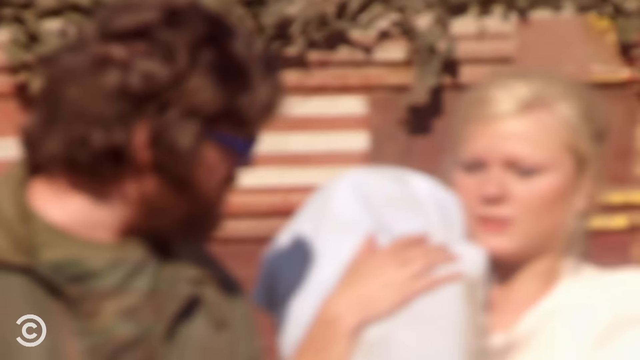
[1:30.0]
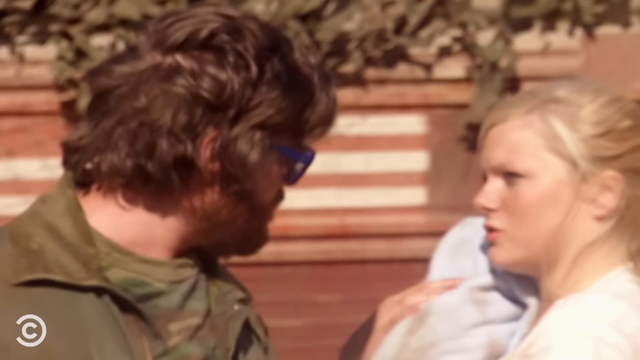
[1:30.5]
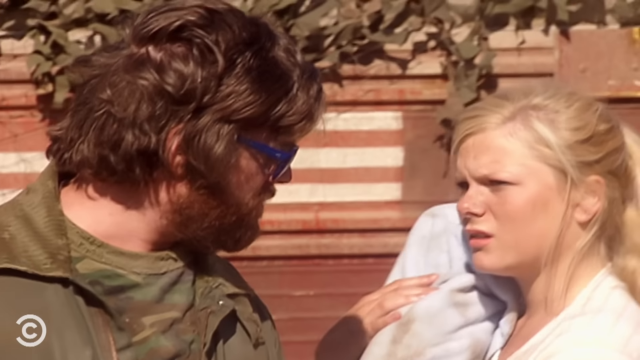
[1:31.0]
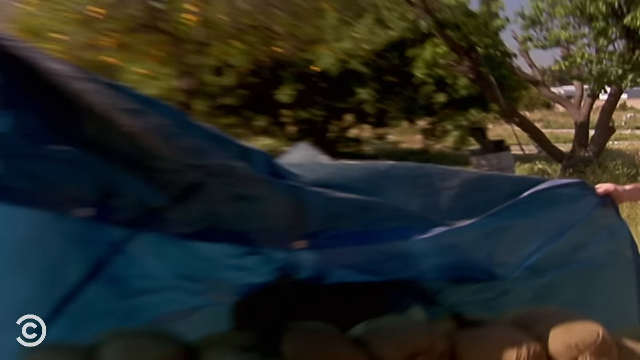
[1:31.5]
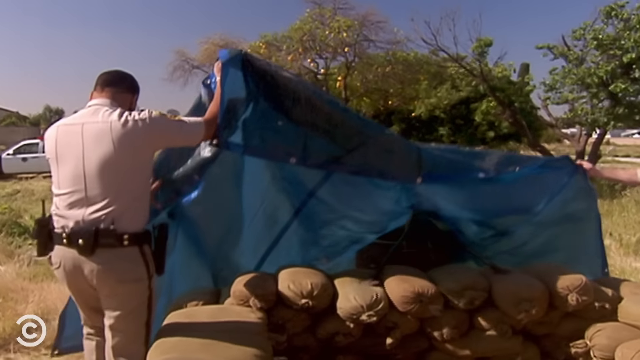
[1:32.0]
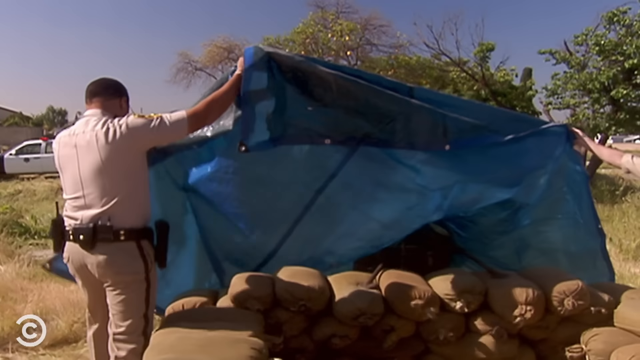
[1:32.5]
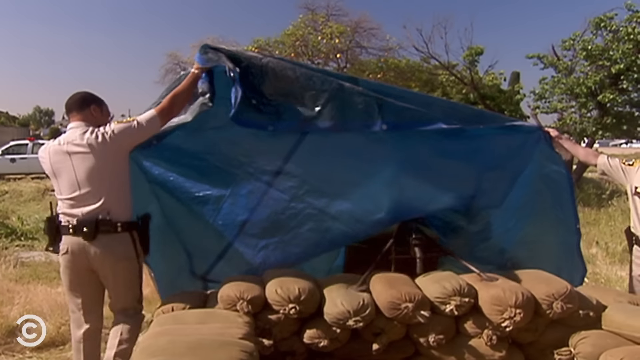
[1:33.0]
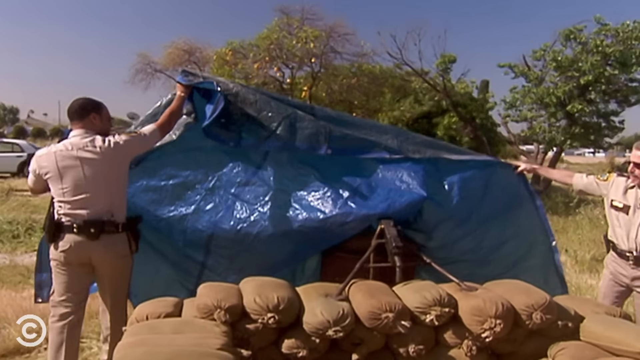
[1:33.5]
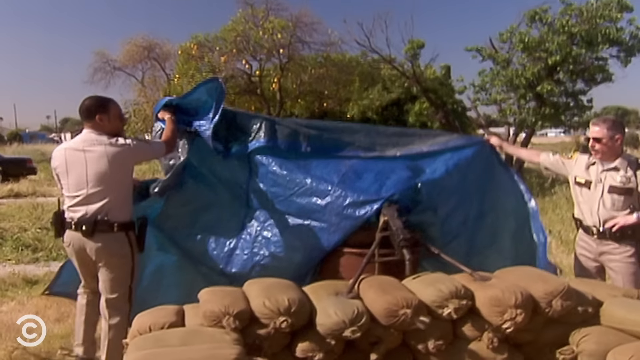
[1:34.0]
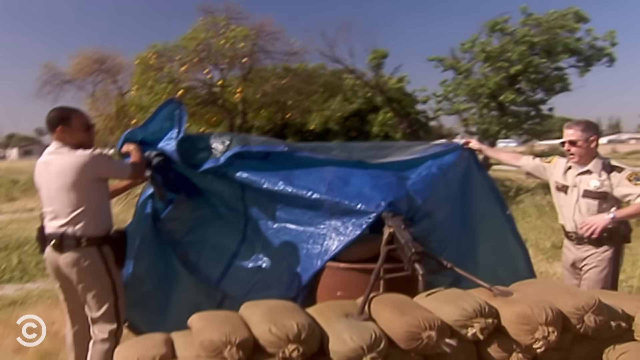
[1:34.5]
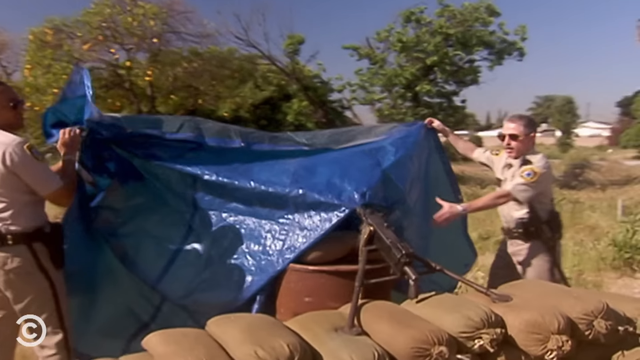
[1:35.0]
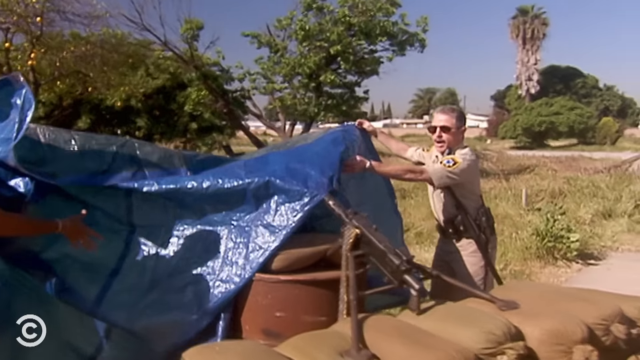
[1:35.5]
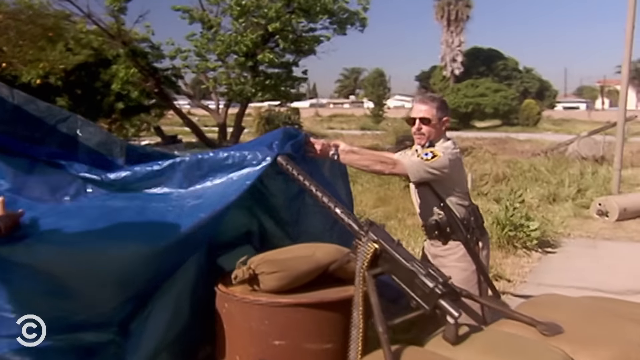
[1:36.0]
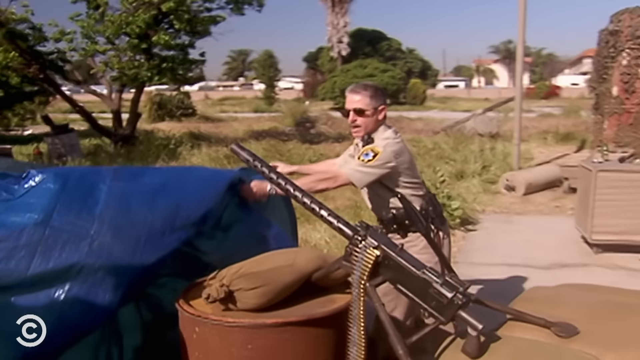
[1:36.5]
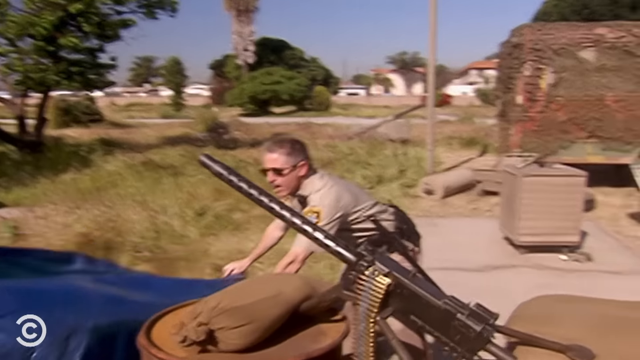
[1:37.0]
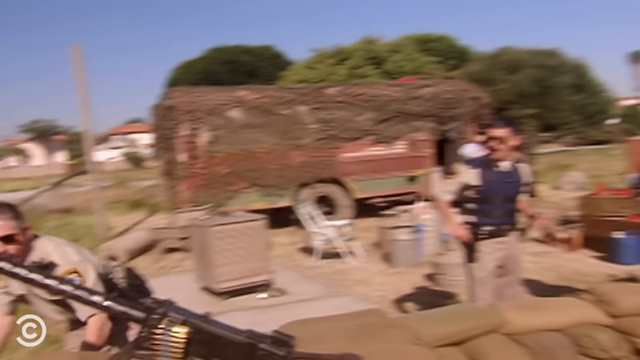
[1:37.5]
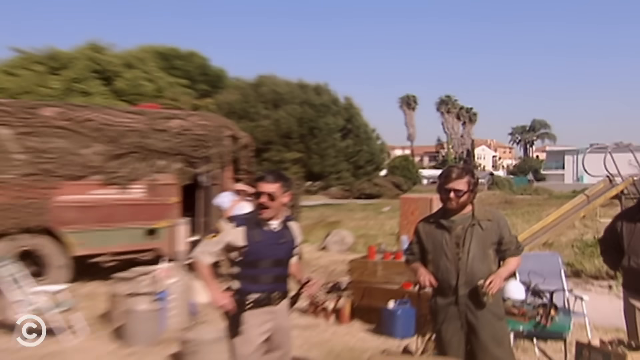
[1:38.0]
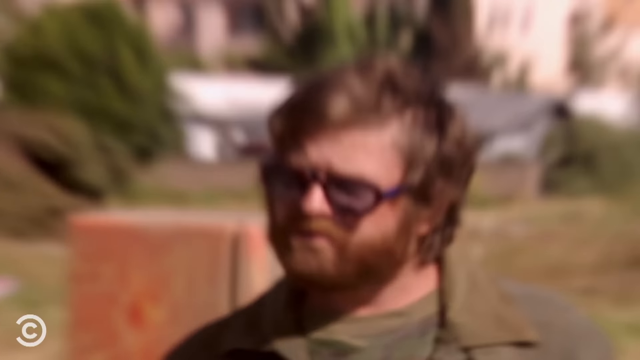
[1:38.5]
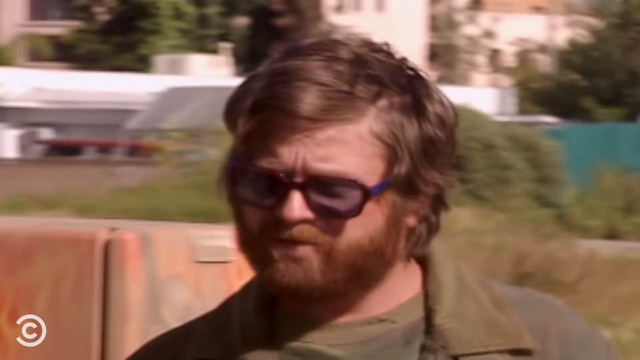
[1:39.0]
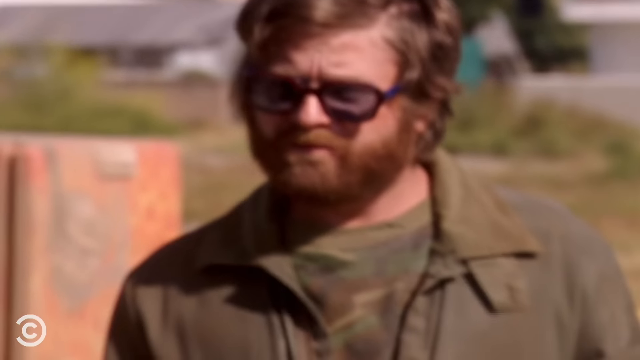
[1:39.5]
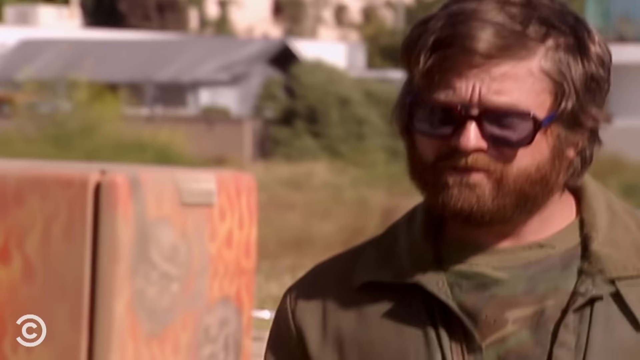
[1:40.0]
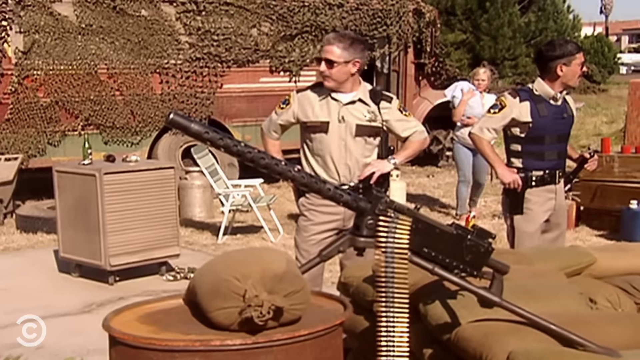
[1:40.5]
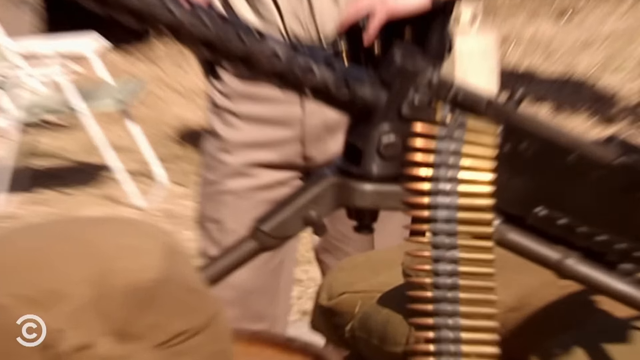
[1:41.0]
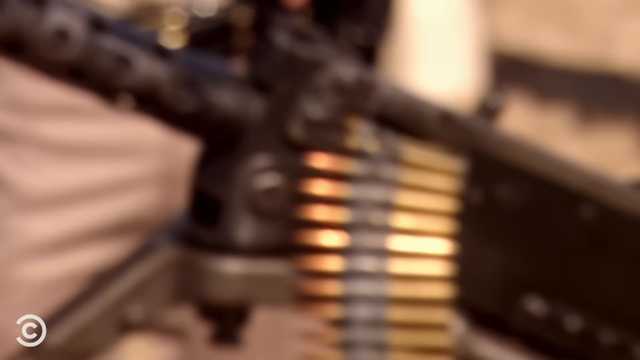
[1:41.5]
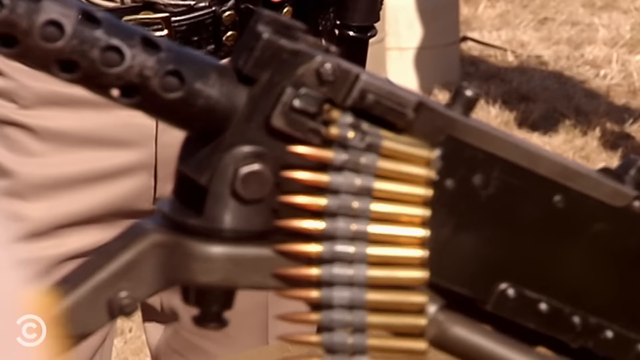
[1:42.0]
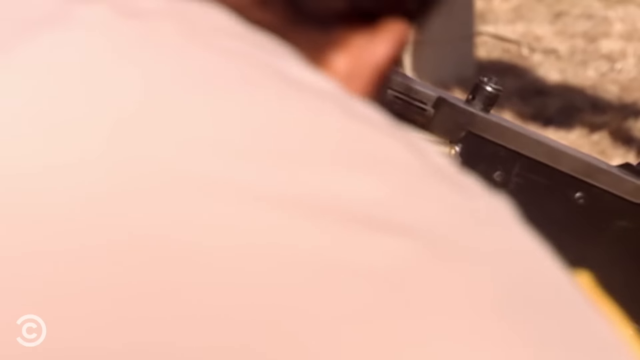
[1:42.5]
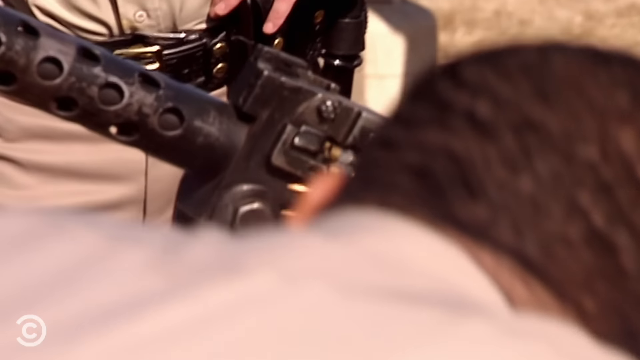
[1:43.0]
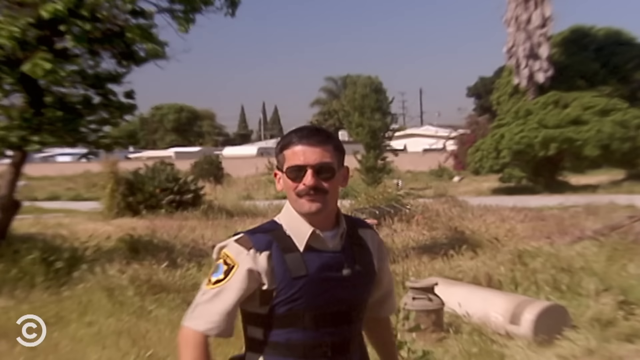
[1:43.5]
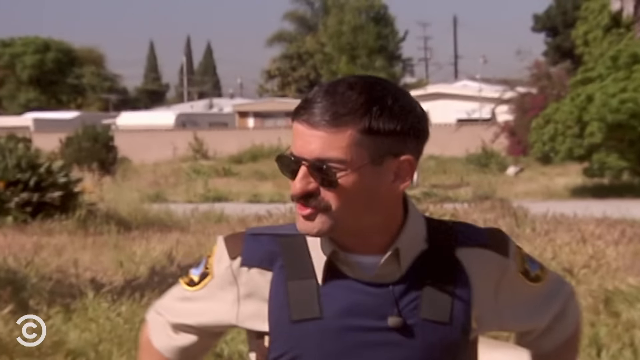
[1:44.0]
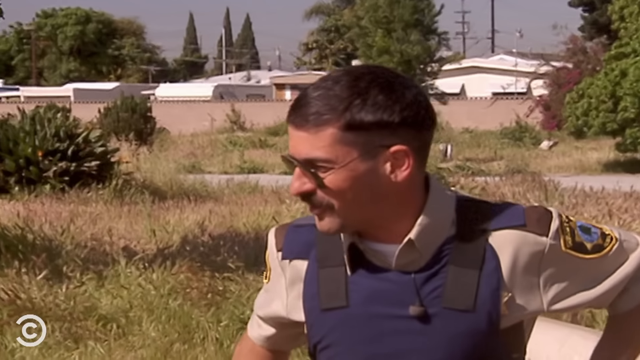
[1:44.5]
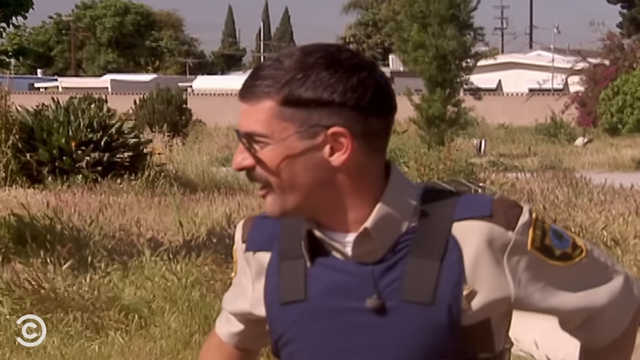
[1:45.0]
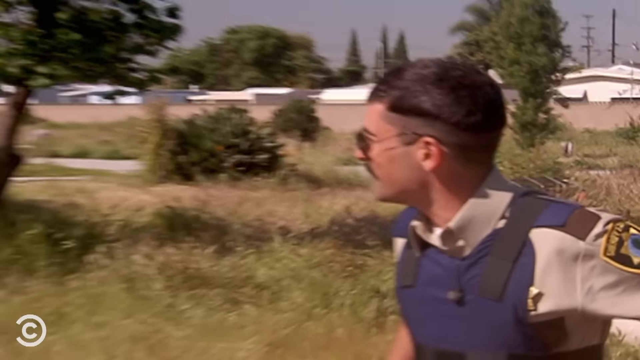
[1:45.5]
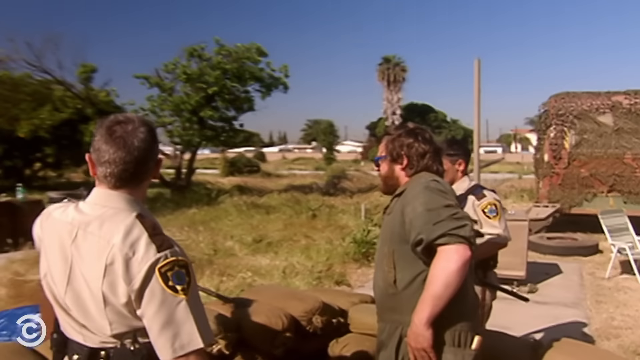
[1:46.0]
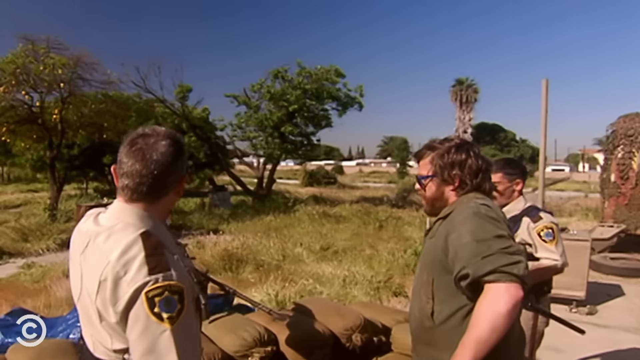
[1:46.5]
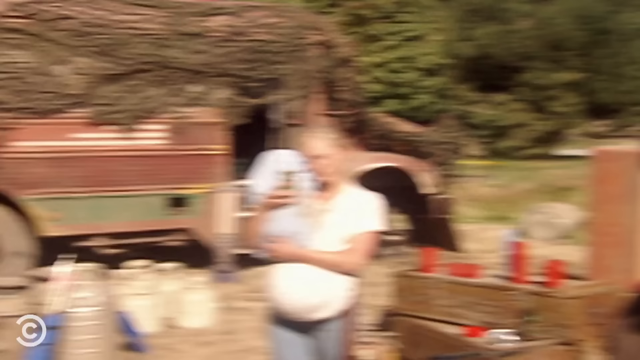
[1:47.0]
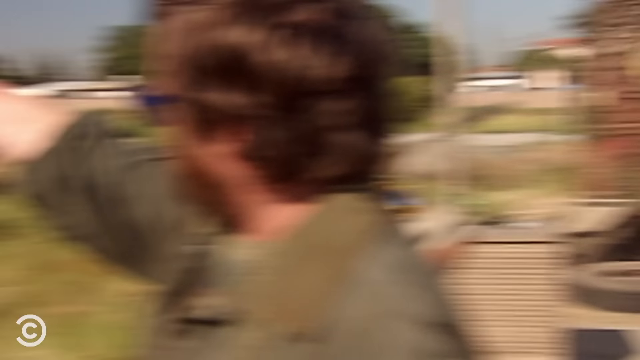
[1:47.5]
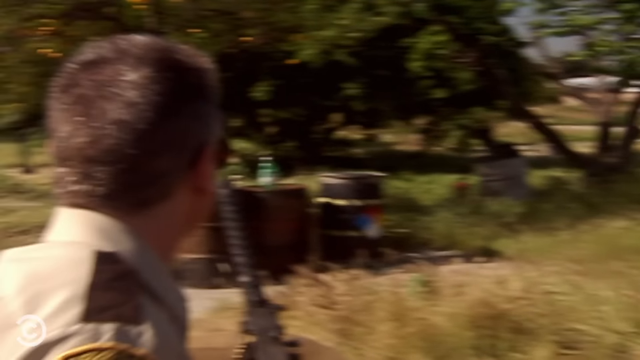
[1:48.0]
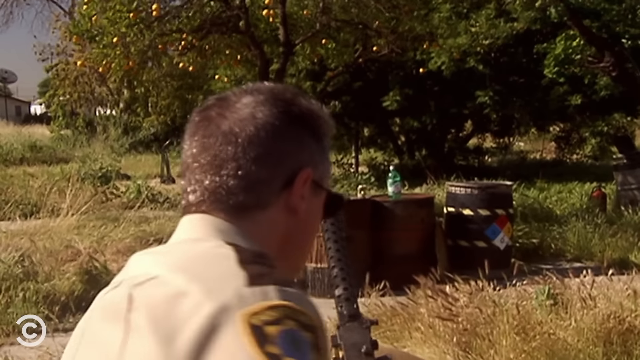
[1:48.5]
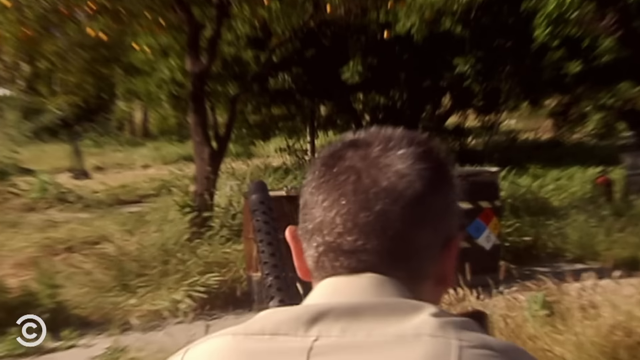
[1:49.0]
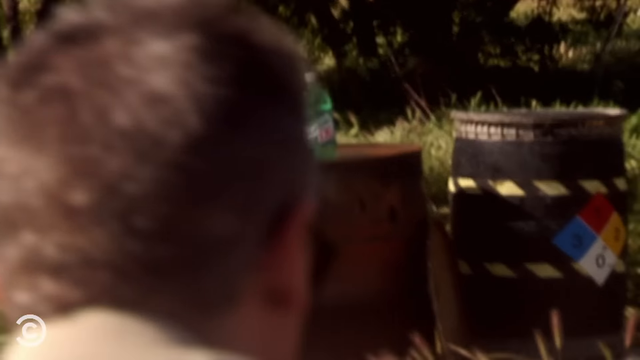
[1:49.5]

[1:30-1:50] A zoomed-in shot shows the guy in the jumpsuit and his pregnant girlfriend or wife talking; they look concerned. It pans to two of the cops taking the tarp off, revealing a heavy machine gun on some kind of propped-up barrel, and zooms in on the gun. Next the guy in the jumpsuit is shown kind of nodding with his eyebrows pushed together, apparently not knowing what to say. Then the cop in the blue vest is shown kind of looking at the scene and nodding, followed by a shot of the guy in the jumpsuit and some of the cops reacting to the weapon that was under the tarp.